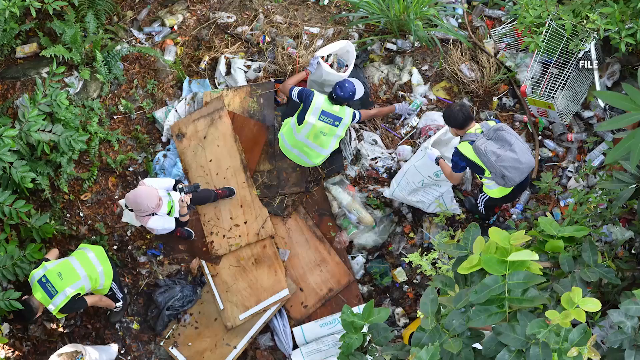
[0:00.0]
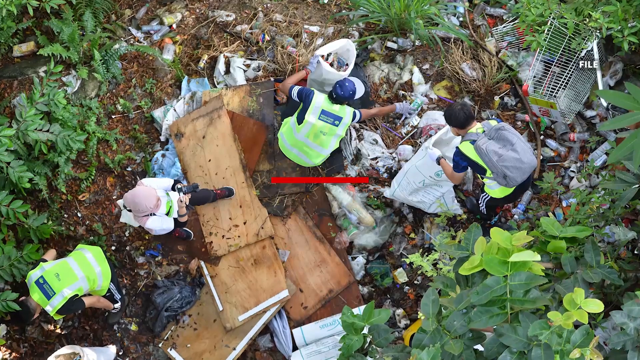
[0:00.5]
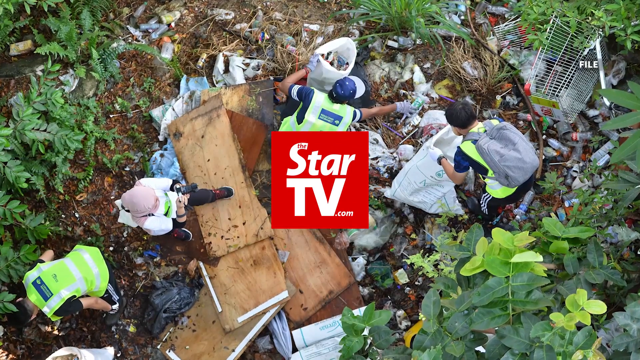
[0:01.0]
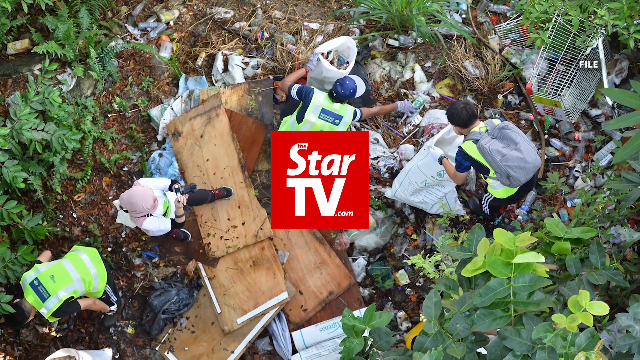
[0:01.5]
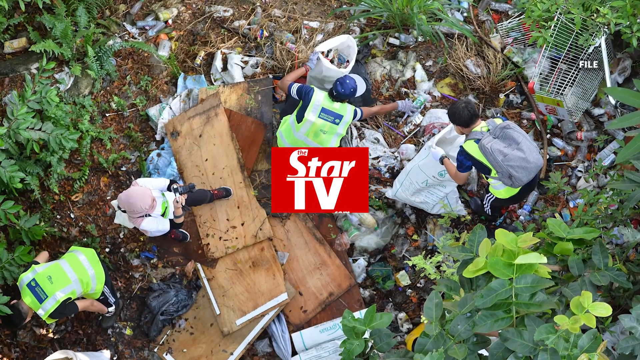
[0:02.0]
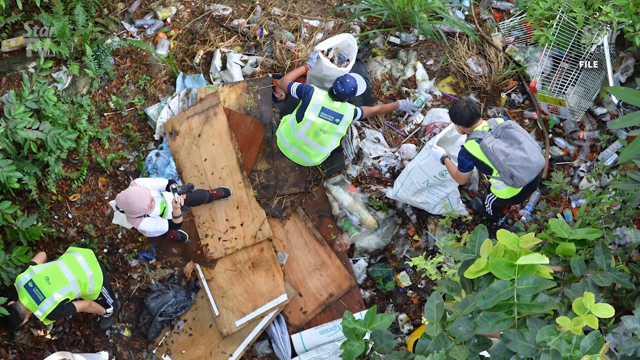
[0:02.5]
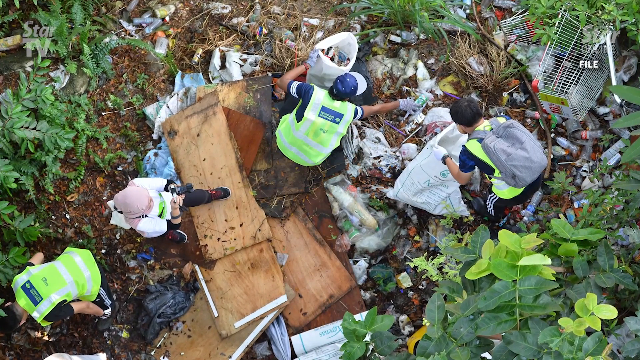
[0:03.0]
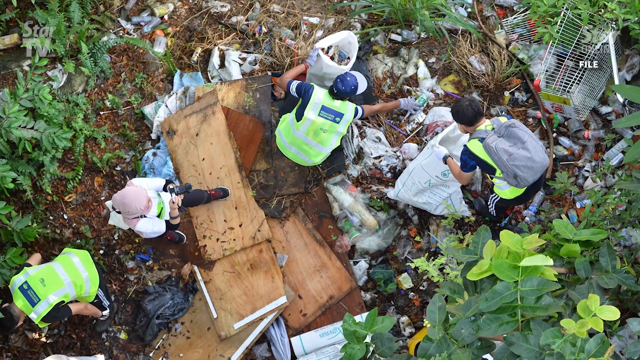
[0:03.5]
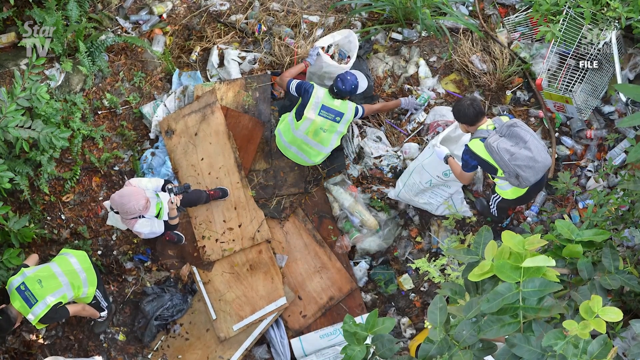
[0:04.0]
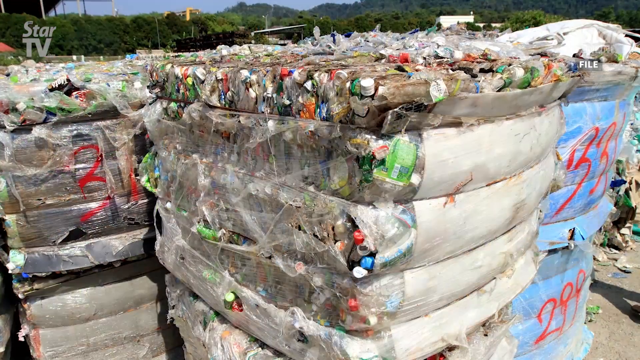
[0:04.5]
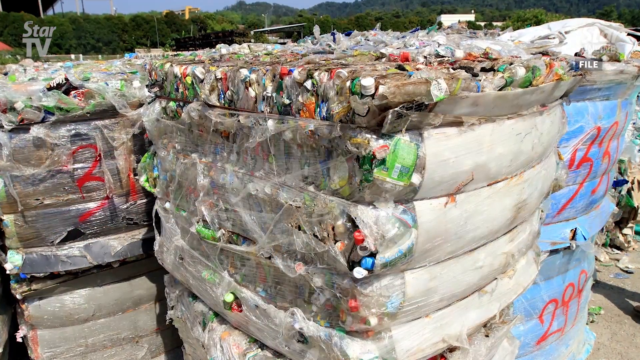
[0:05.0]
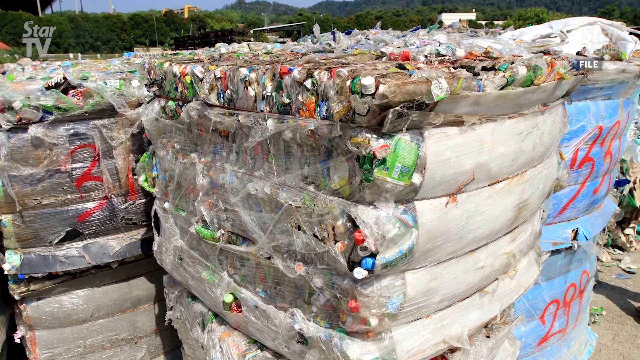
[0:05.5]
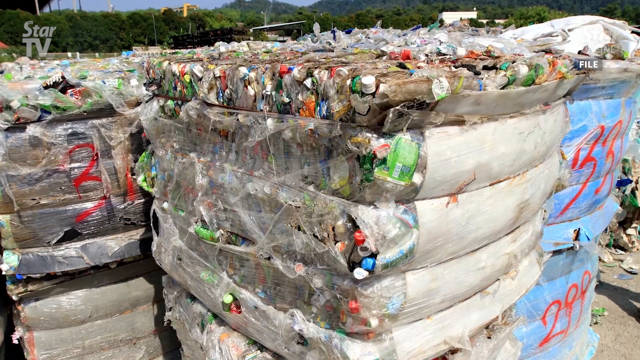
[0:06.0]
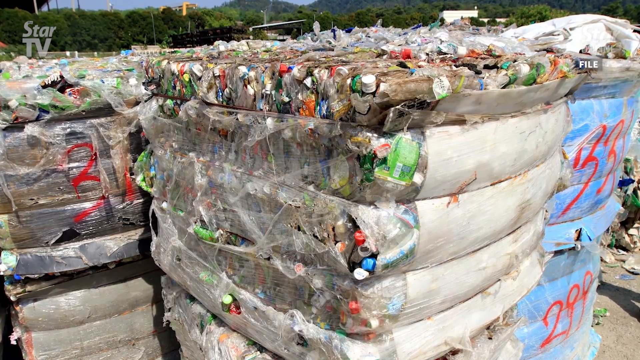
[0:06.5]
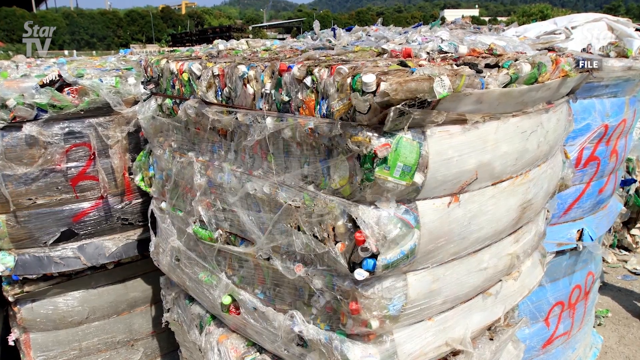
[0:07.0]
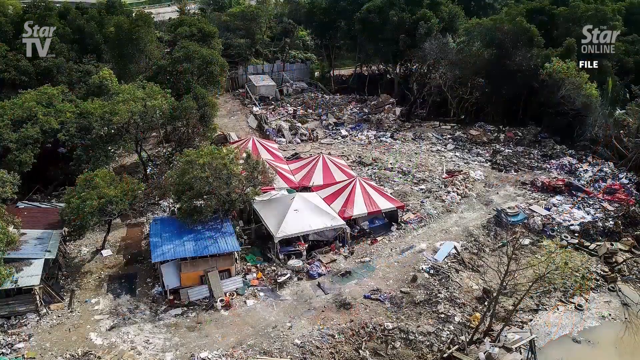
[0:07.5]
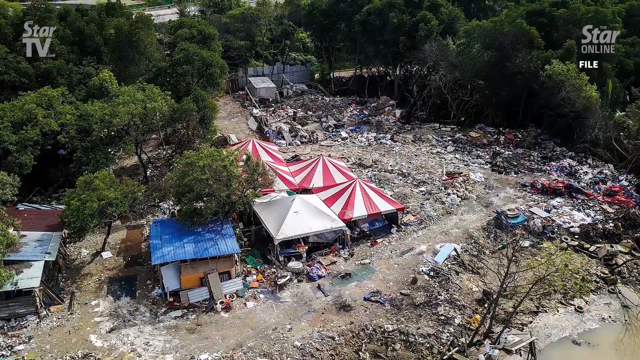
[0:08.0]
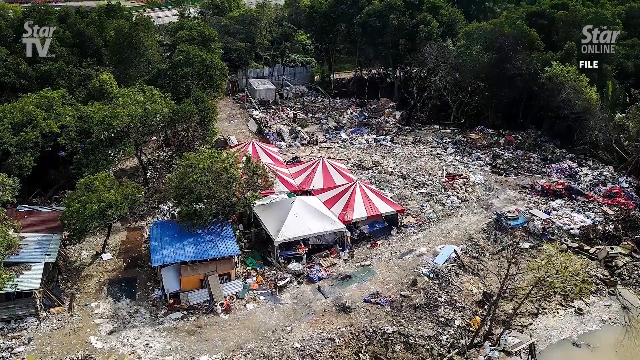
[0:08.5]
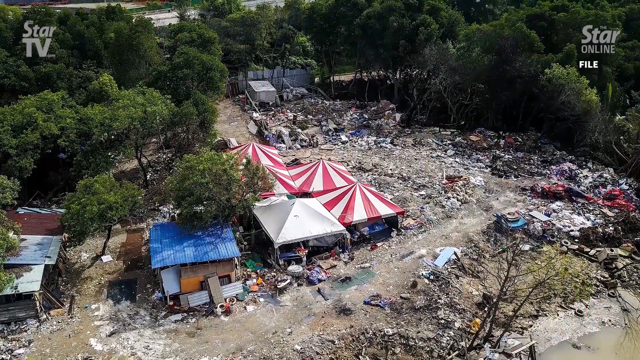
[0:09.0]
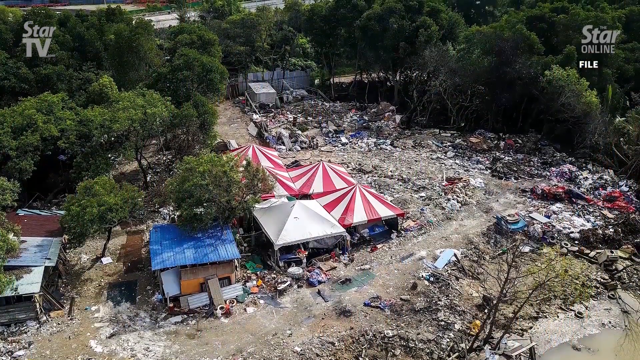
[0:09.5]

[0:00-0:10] The video opens with an aerial still image overlaid with an icon for Star TV. The image looks down on four people in a slight opening in the woods, where there are pieces of plywood, lots of garbage and a closet rack; it appears to be what was perhaps a homeless encampment. The people all wear fluorescent vests over their clothes and have trash bags, and they appear to be picking up trash and putting it in the bags. The next still image shows a lot of baled recyclables, cans and bottles, which look like they have been put through a baler, compressed, strapped and wrapped in plastic. Then an aerial view shows what looks like three or four little shanties in the wooded area, along with four red and white striped tents and one white tent; there appears to be lots of trash that people have been cleaning up, and it may have been an old dump area. A Star TV watermark is in the top left of the screen, and on the right a watermark reads "Star Online" with "File" underneath it.